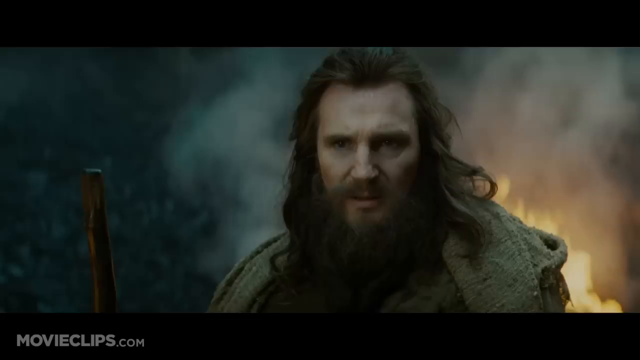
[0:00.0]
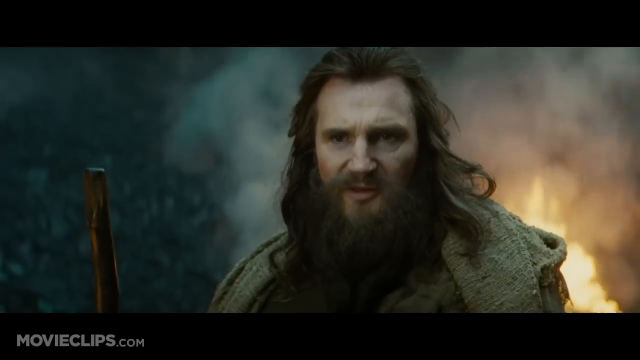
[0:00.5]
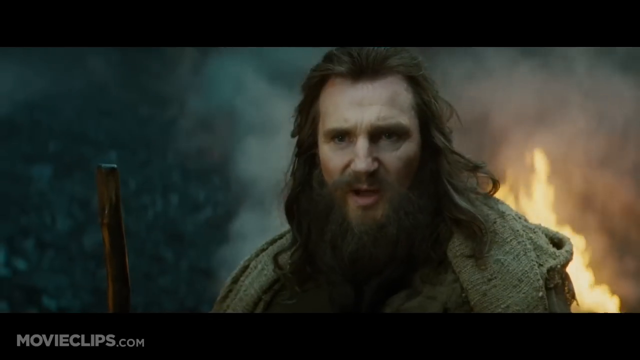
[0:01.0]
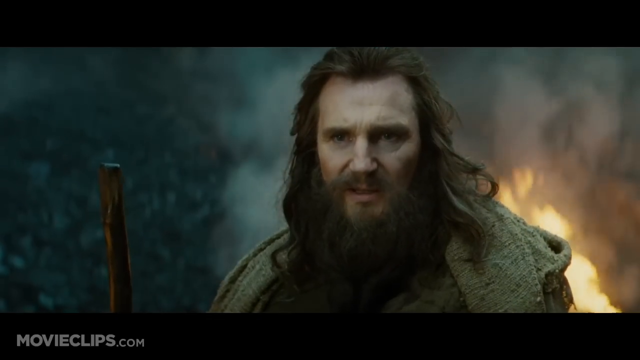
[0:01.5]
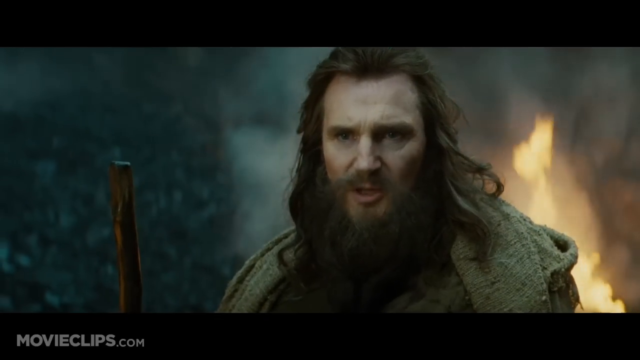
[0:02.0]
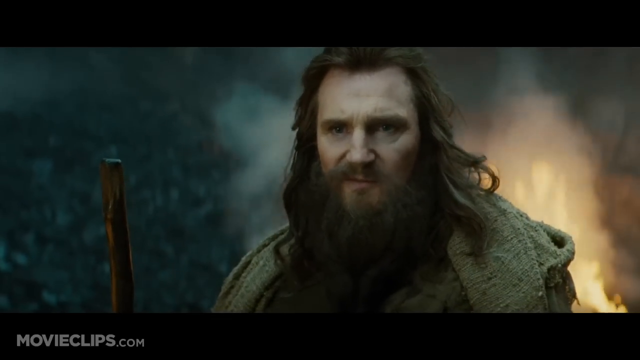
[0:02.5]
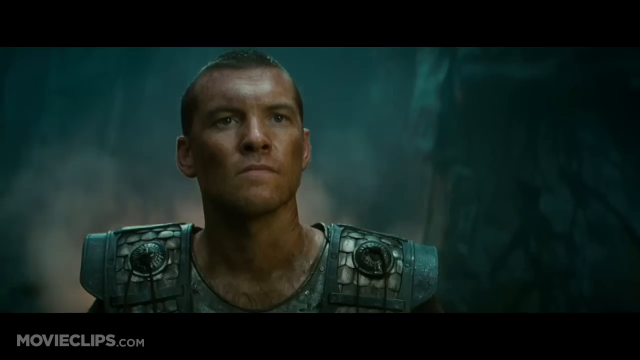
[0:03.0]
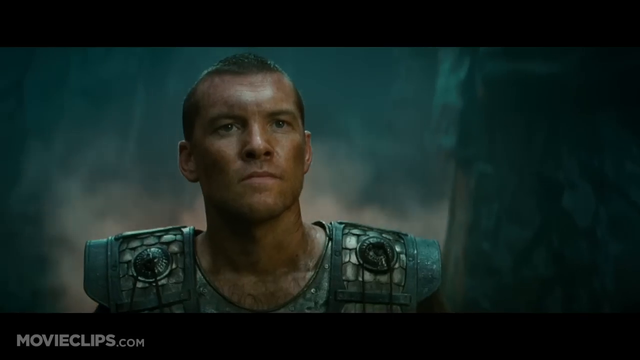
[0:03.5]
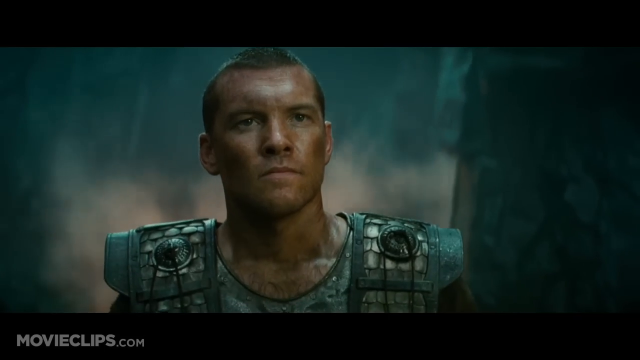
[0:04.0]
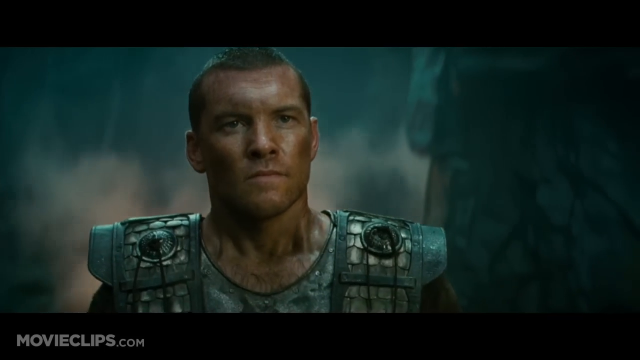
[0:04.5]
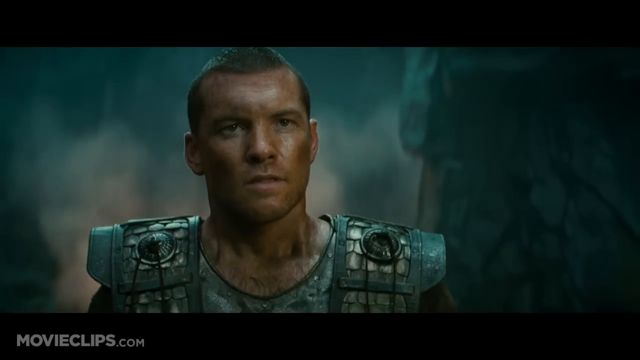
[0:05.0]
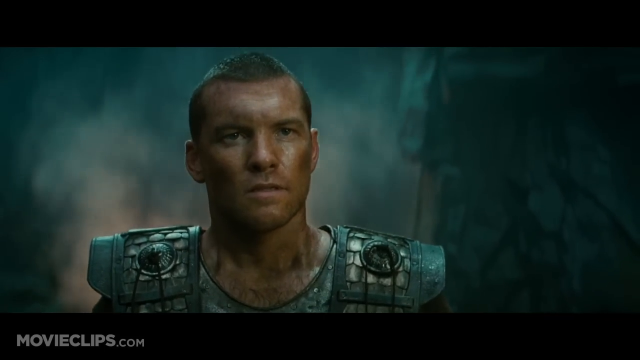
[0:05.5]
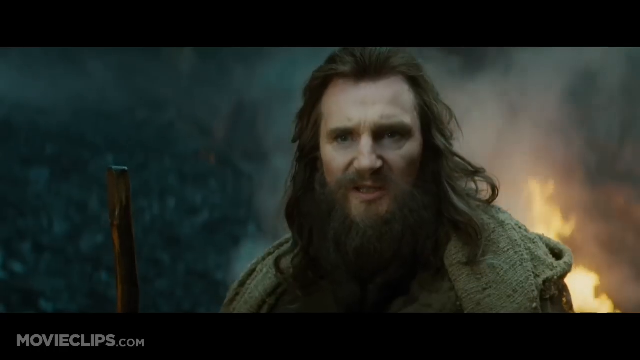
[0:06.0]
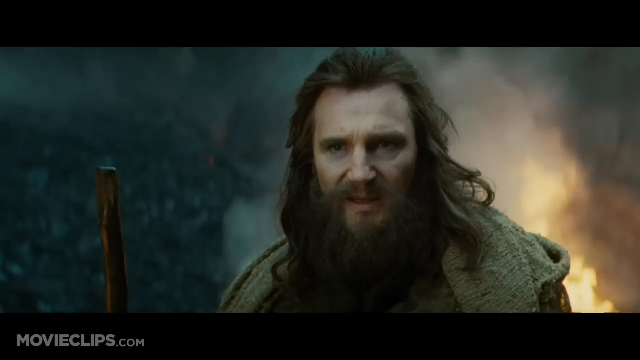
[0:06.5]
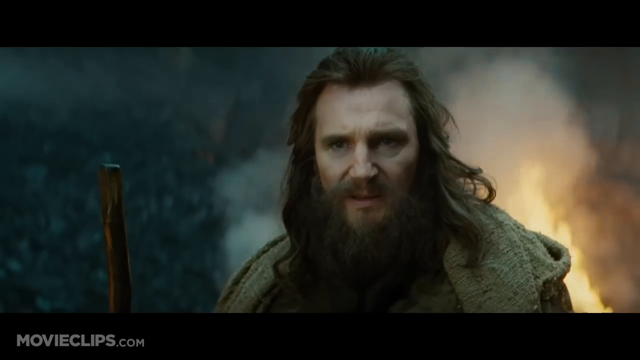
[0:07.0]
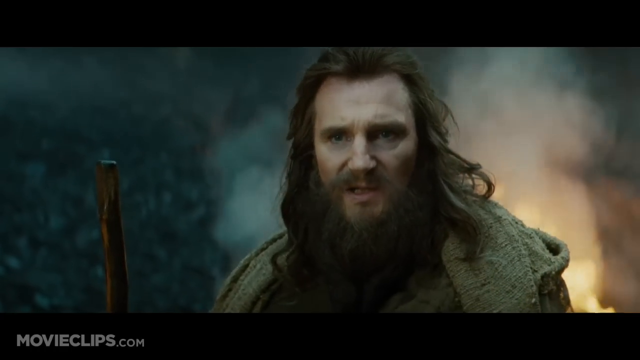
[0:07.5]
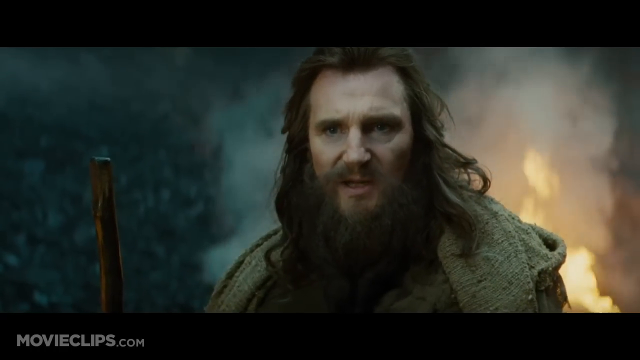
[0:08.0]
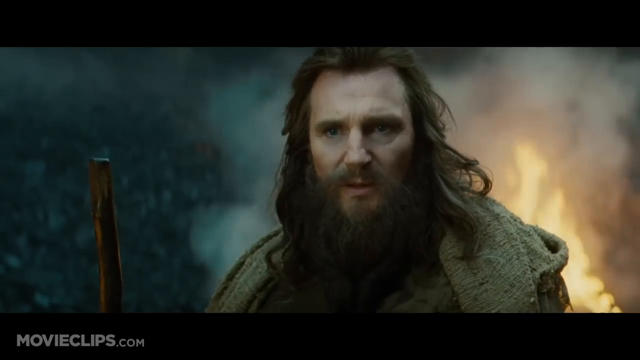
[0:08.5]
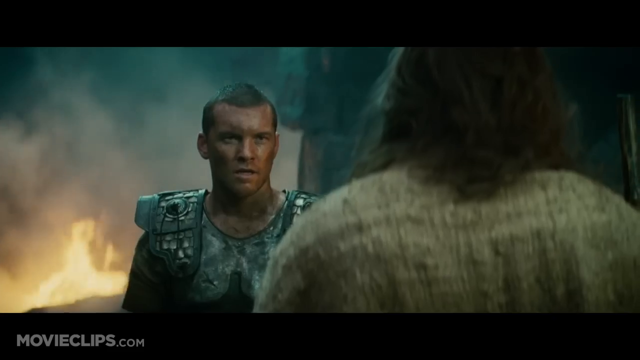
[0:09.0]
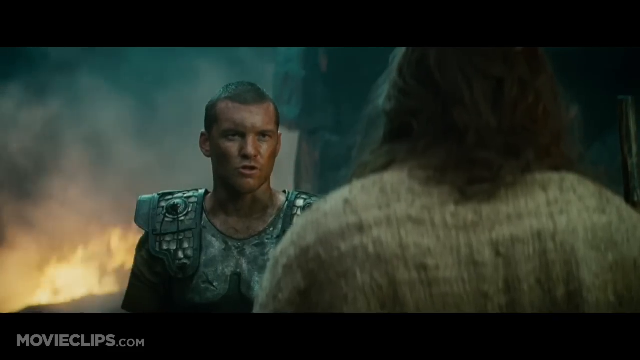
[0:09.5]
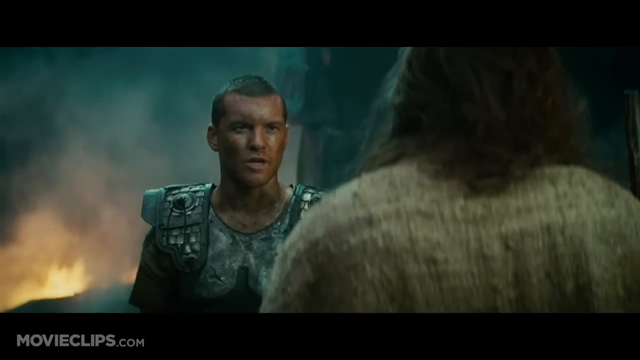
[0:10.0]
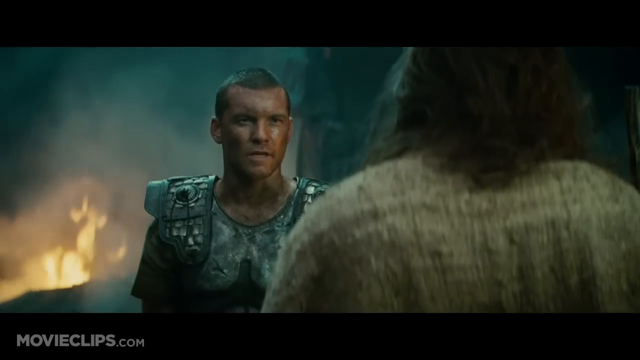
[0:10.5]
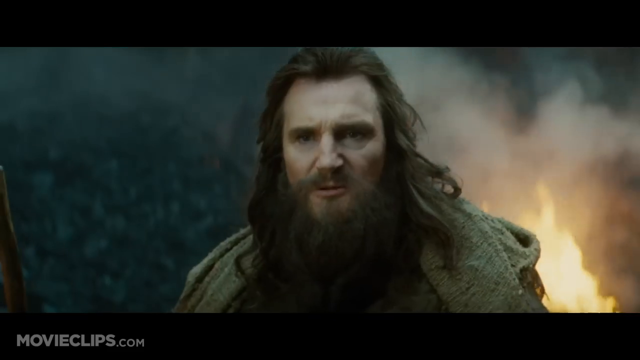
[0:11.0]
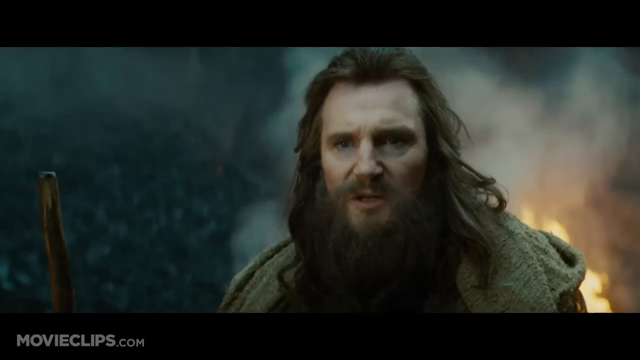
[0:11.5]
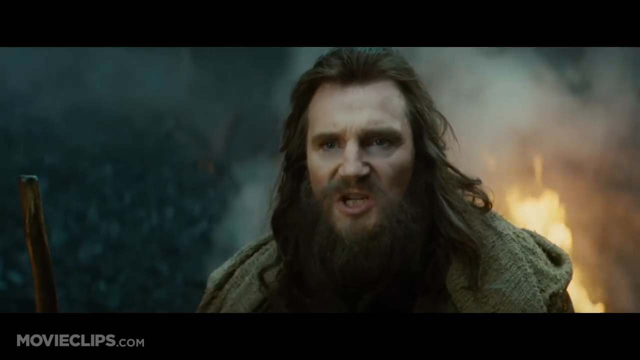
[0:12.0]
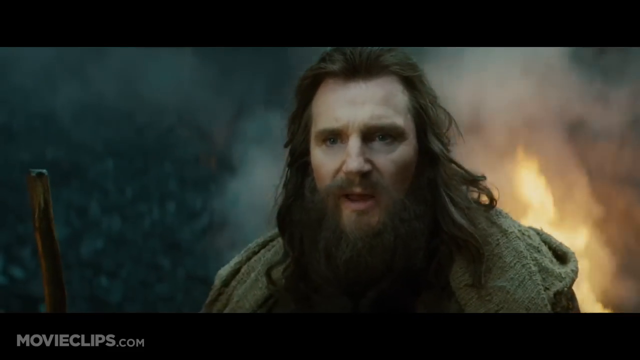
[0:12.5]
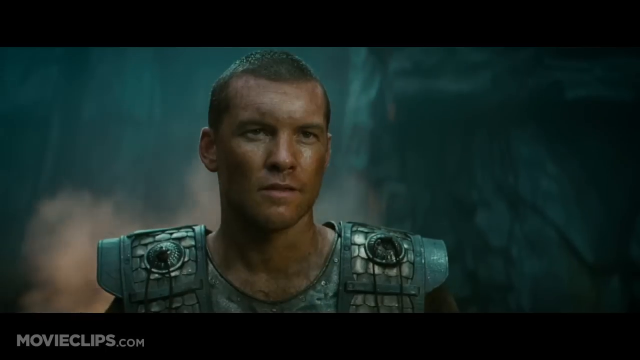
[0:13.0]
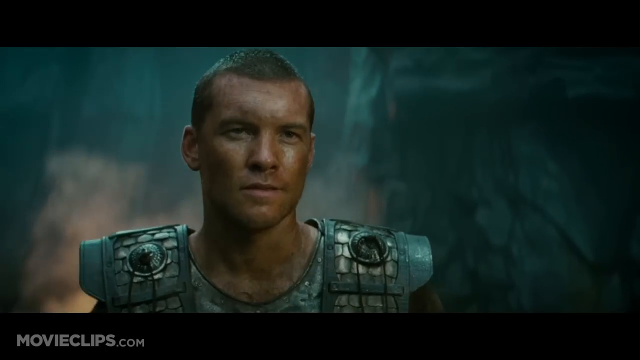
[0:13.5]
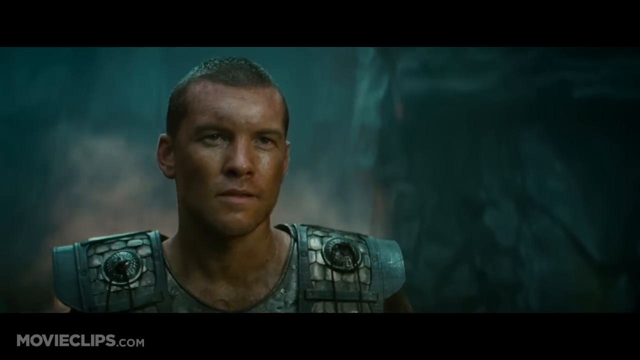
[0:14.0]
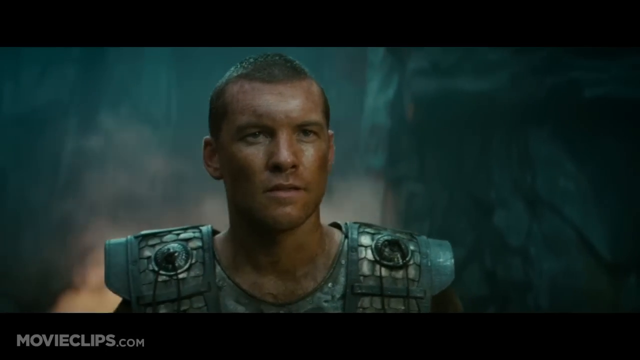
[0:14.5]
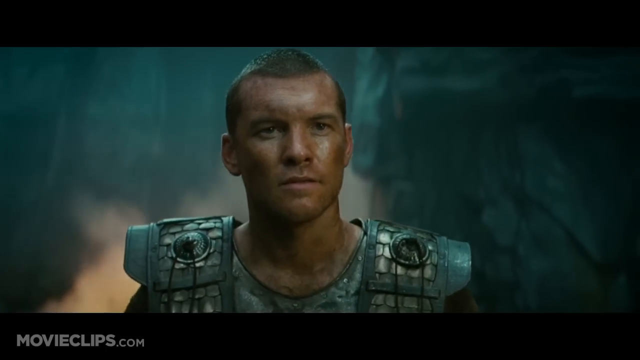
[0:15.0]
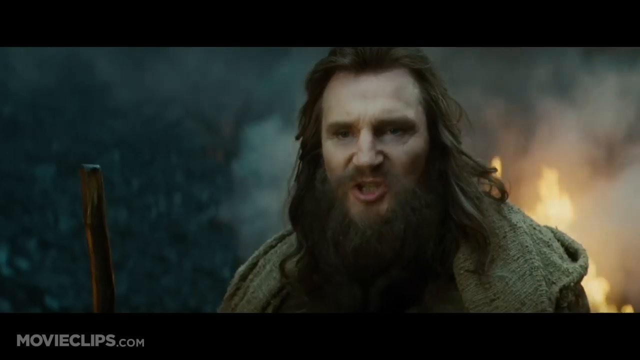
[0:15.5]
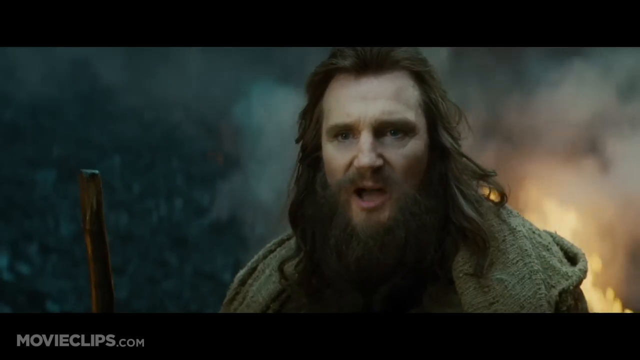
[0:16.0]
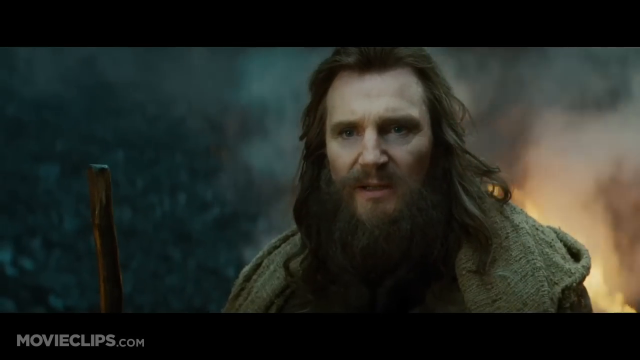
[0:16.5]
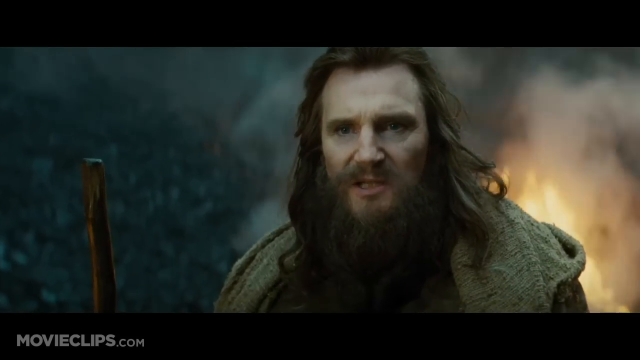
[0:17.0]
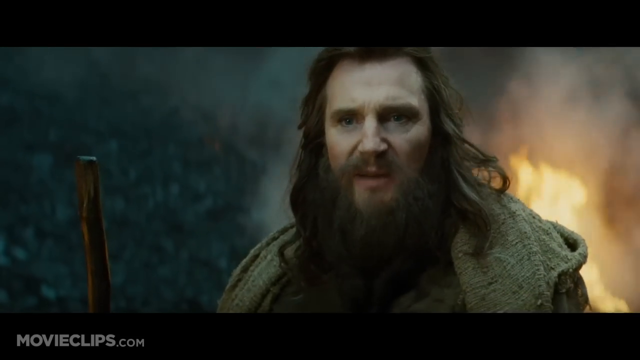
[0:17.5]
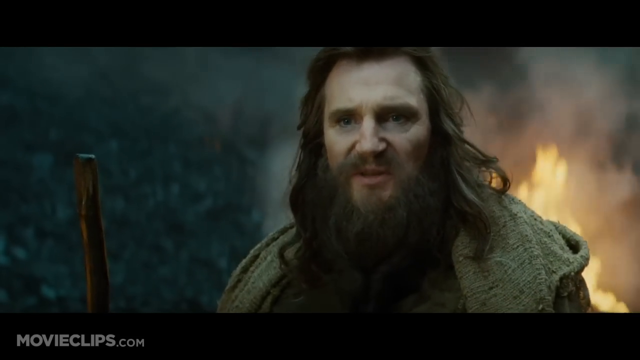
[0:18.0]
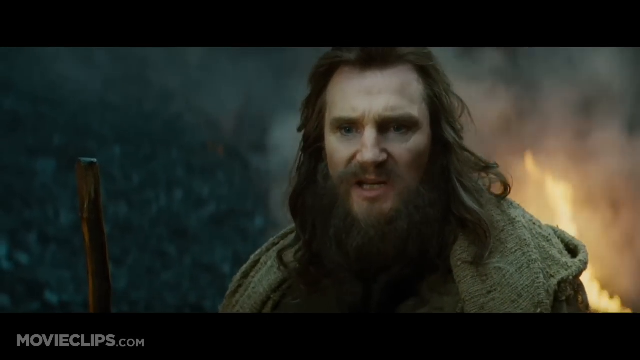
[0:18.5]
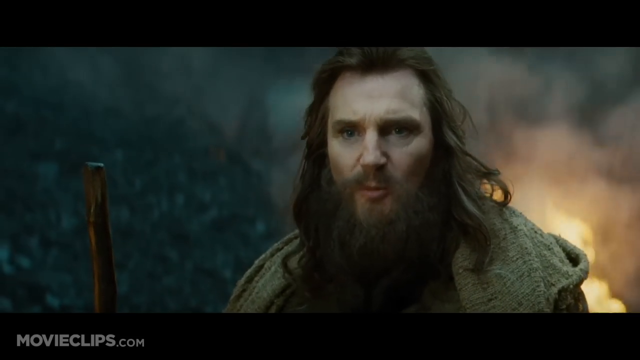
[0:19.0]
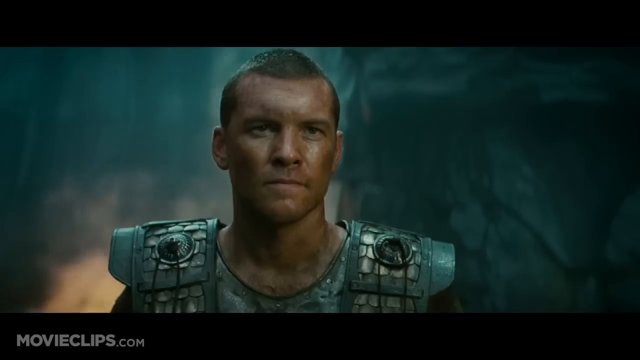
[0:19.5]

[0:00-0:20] A man with long hair stands with fire behind him, talking to someone. The two men are dressed in costumes that look like they come from a war long ago. Text below reads "movie clips," indicating this is a movie clip, and "movieclips.com" is also written on the screen. The two men talk in a way that looks like they are fighting and challenging each other, with fire and smoke everywhere, which seems to suggest a big fight or war has taken place. Their faces show anger toward each other, and they appear about to fight. One has very long hair and the other very short hair. They seem to belong to different armies: one is just wearing clothes, while the other wears army-like attire.